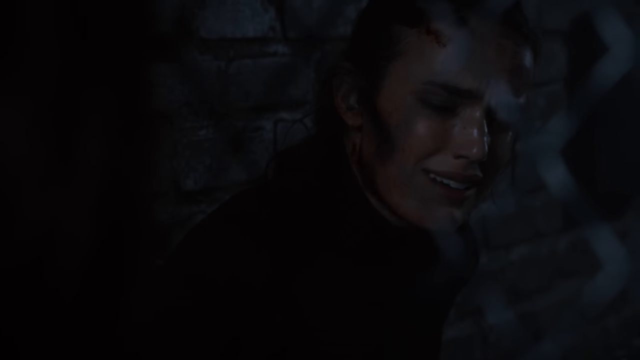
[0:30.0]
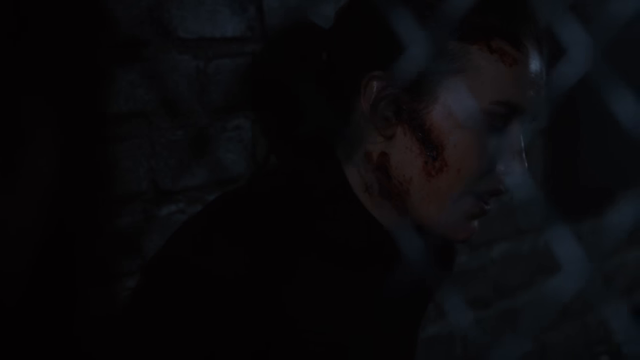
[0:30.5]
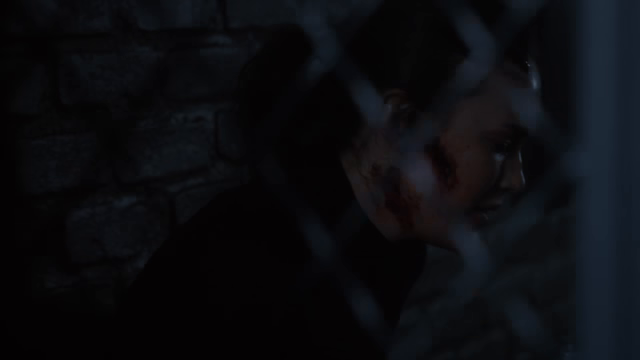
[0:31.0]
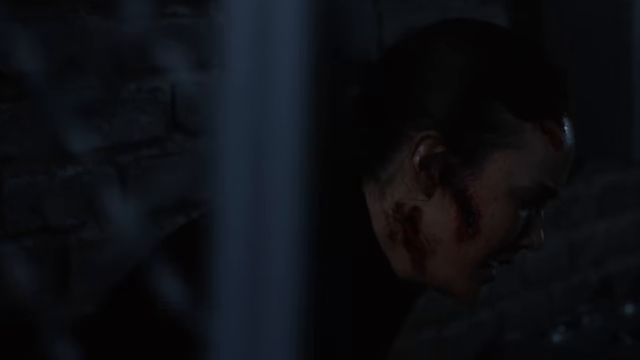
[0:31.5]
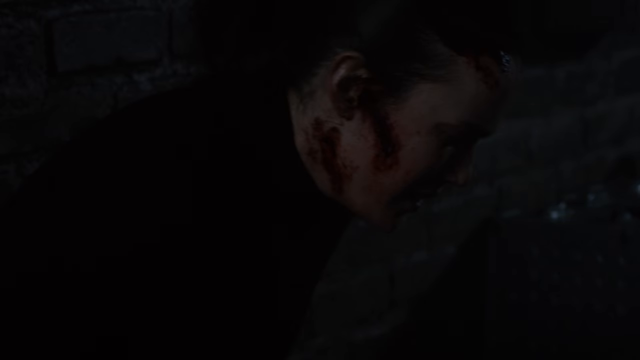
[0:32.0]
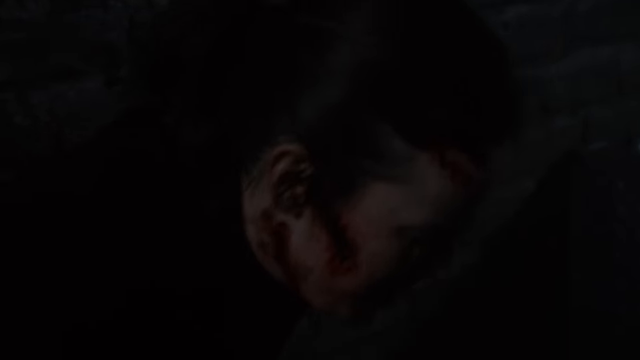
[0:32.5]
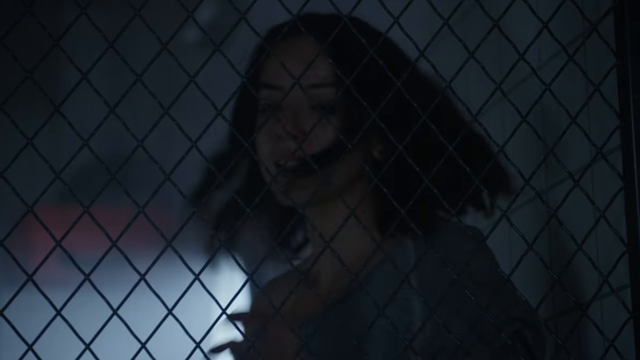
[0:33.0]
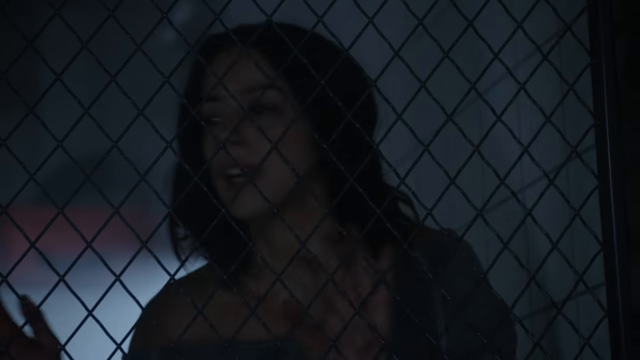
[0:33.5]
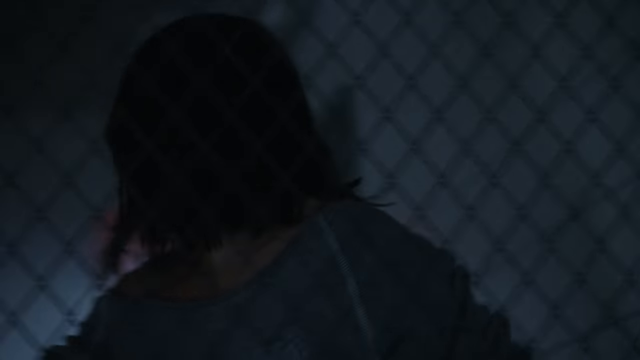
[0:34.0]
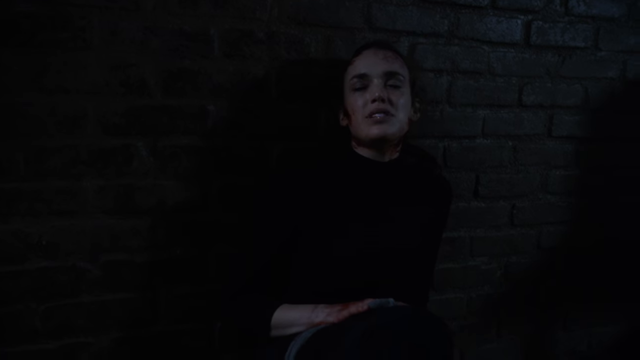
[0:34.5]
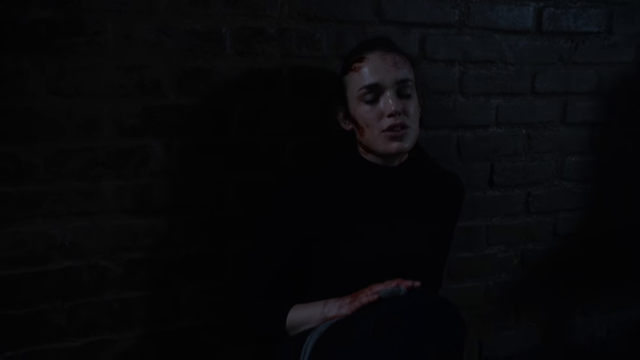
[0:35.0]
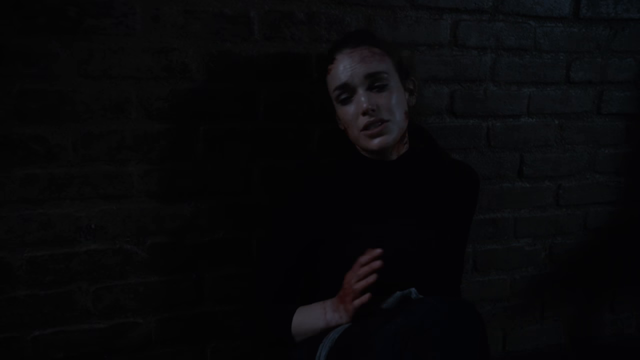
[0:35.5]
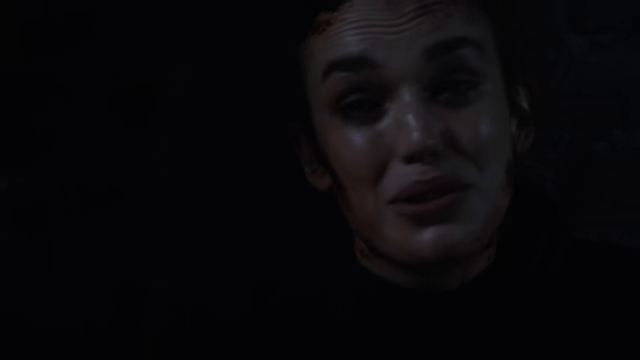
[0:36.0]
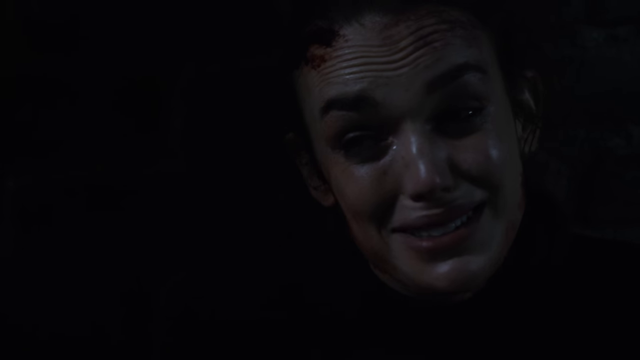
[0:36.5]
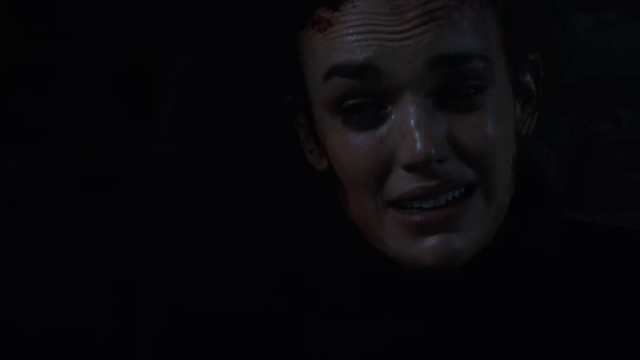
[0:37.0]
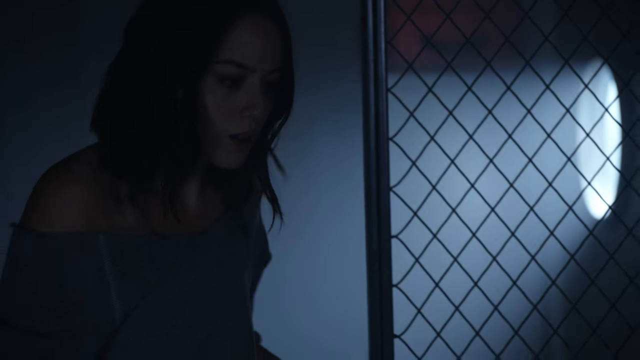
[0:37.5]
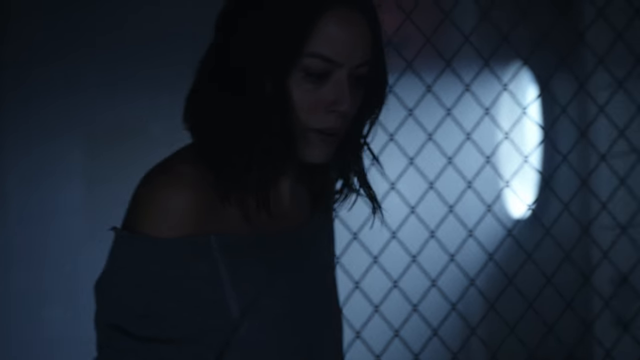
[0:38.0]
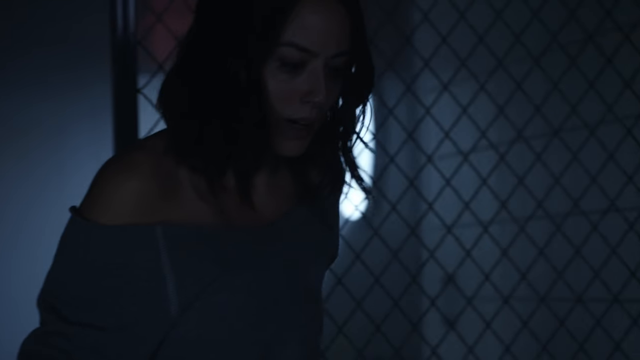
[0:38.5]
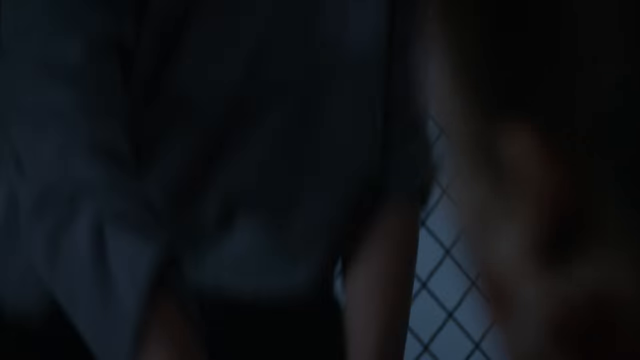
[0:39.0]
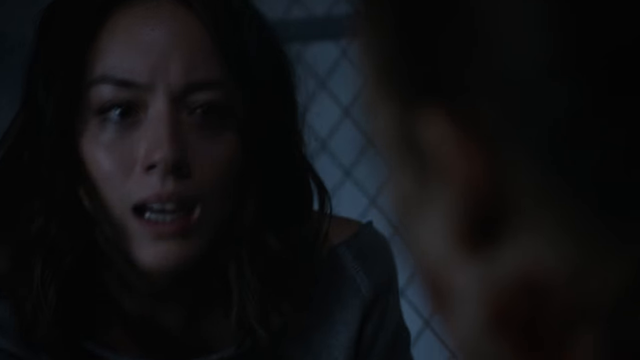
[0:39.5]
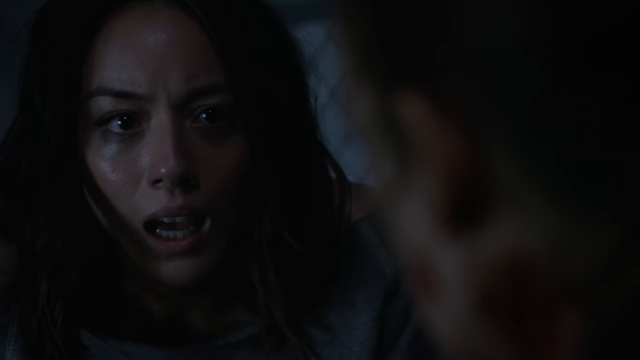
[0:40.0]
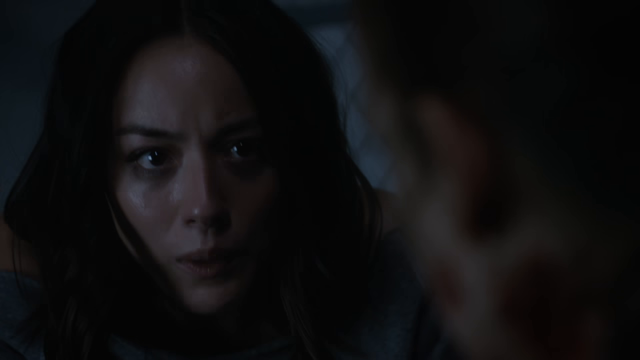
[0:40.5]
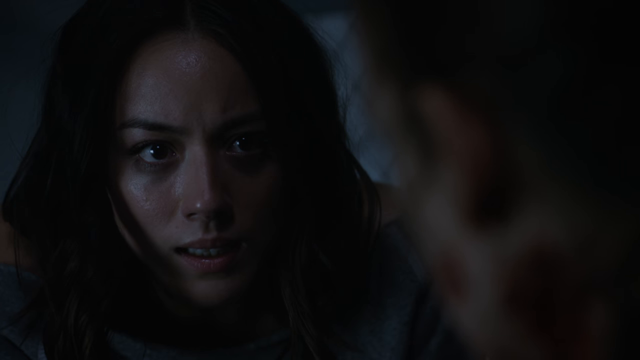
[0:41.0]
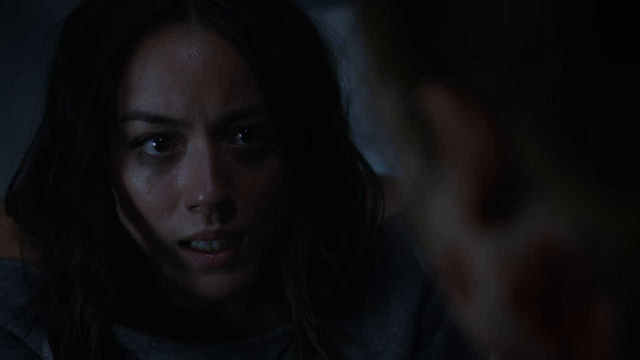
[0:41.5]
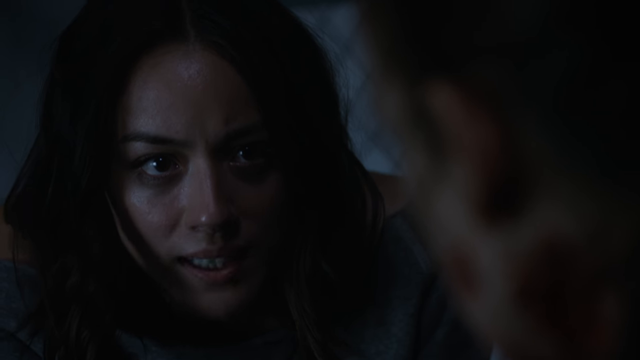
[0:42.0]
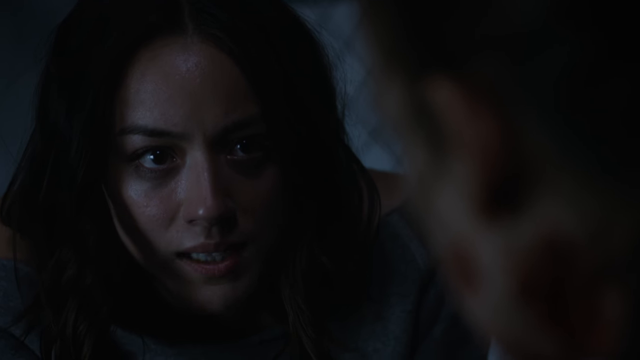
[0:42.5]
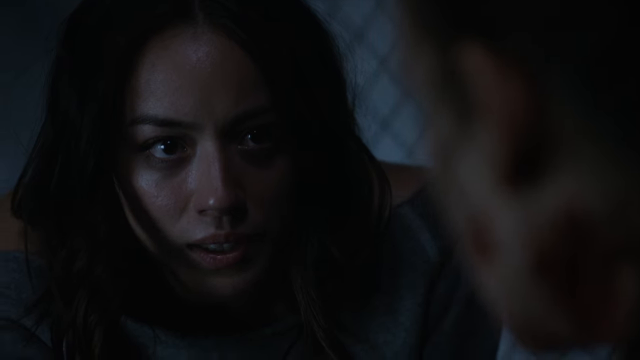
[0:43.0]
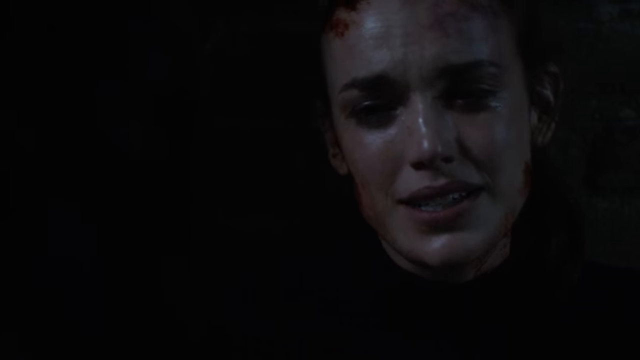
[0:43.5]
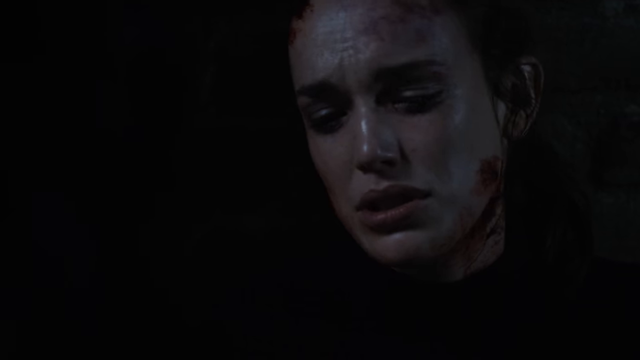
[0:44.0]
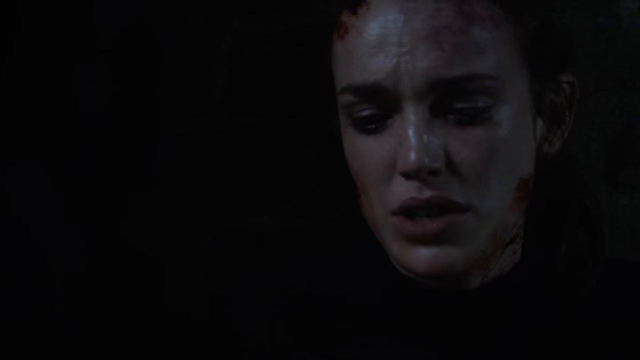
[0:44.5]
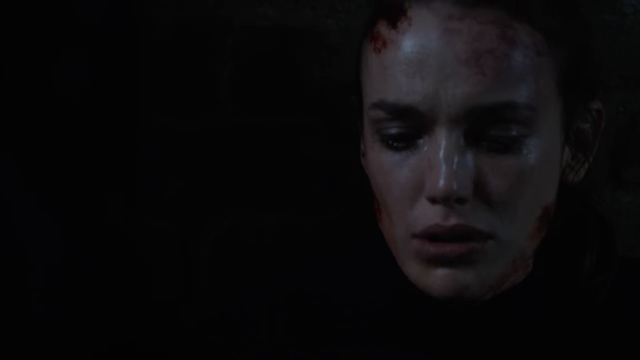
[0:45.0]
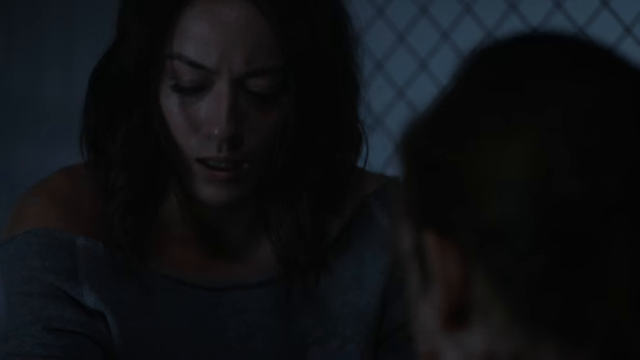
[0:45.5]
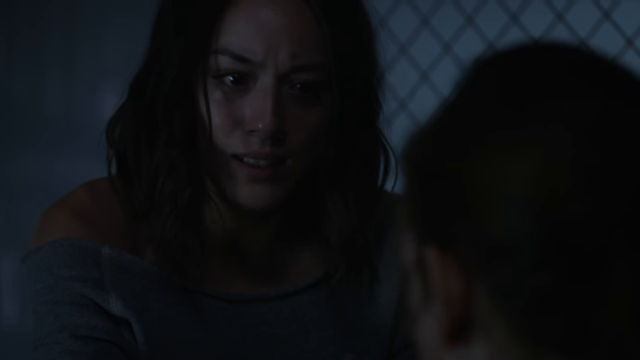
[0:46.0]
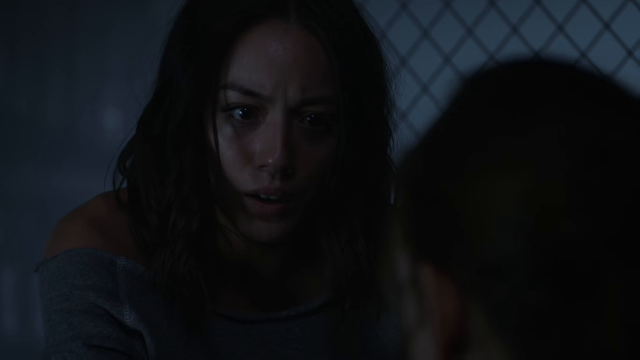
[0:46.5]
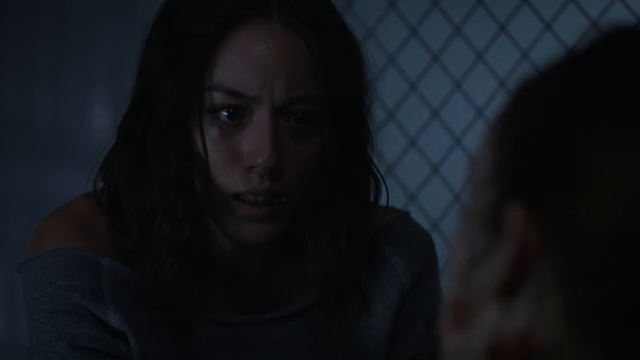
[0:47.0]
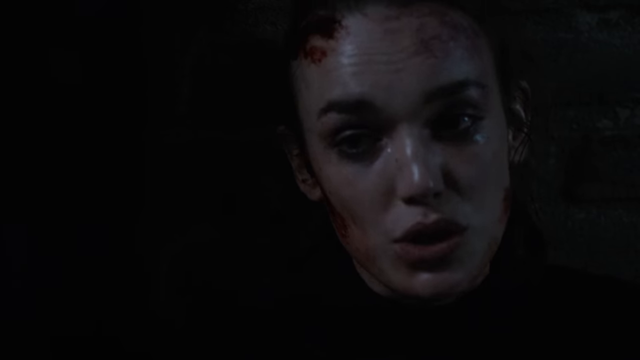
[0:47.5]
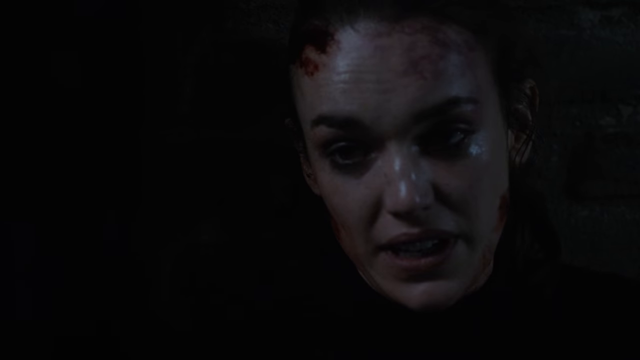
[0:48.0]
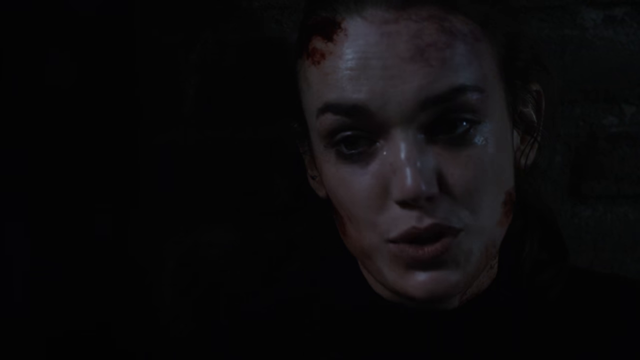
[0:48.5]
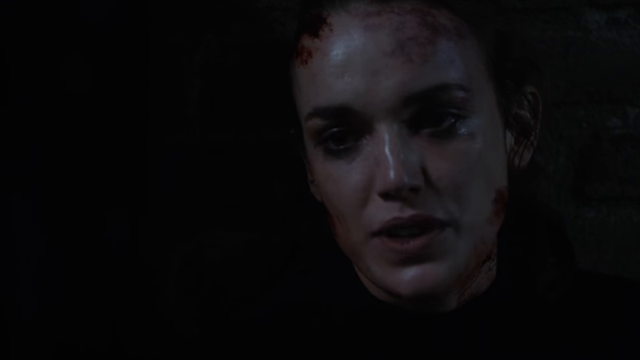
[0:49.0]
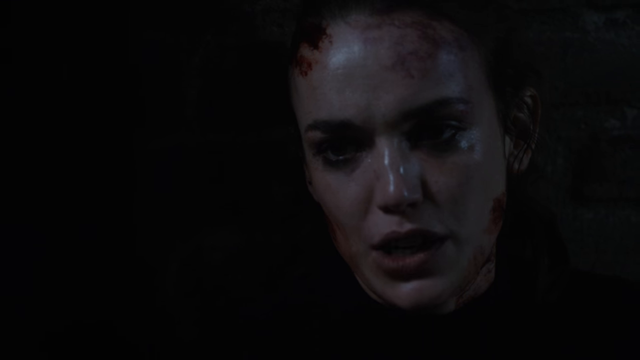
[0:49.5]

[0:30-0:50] The scene stays in the room with the chain-link fence, which seems to cordon off some type of storage unit. The woman with dark hair, mid-20s to early 30s, in the light blue shirt like a sweatshirt that hangs off her shoulder, has gone into the fenced area, and she comes back out of it to speak with the other woman, who is sitting on a bench with a brick wall behind her. The seated woman's face looks like it has blood stains and possibly chemical burns, and she wears dark clothes. In the background, inside the fenced area, a round window lets in sunshine. The woman in blue squats and kneels down to the level of the seated woman, and they appear to have an intense conversation; the seated woman's facial expression seems quite emotional. They go back and forth, about five exchanges, alternating between the woman in blue and the other woman.